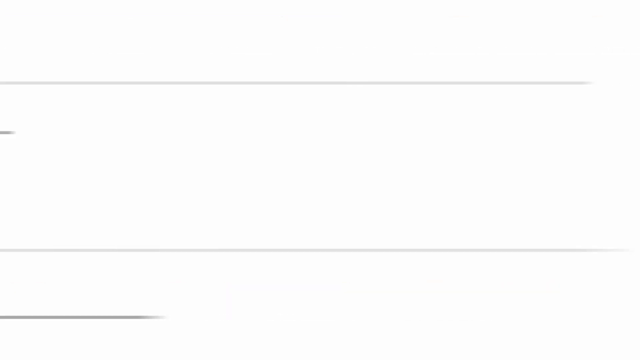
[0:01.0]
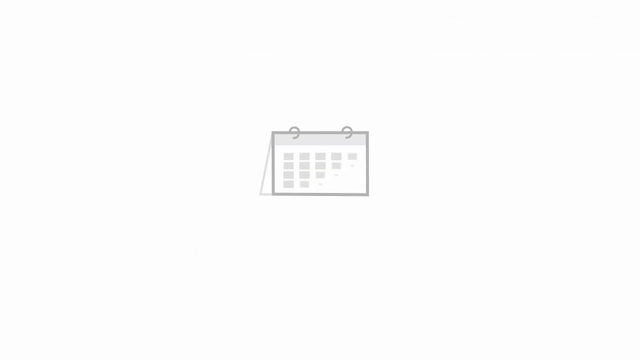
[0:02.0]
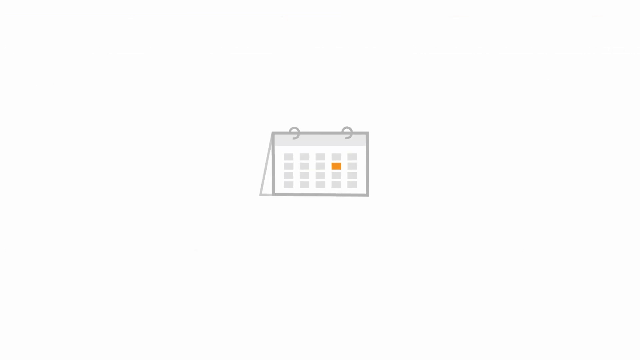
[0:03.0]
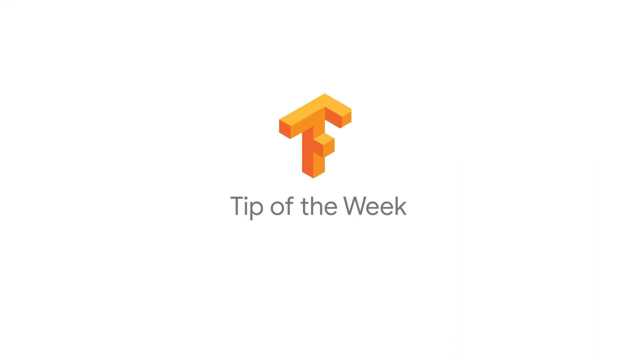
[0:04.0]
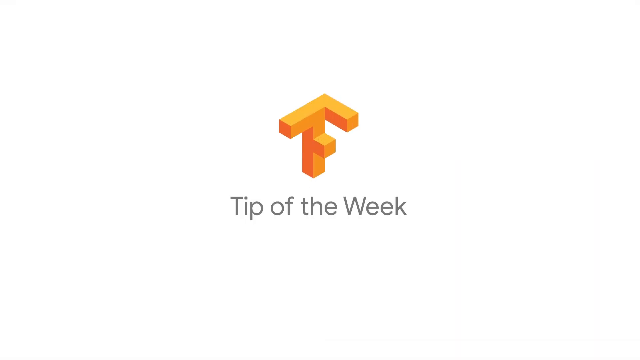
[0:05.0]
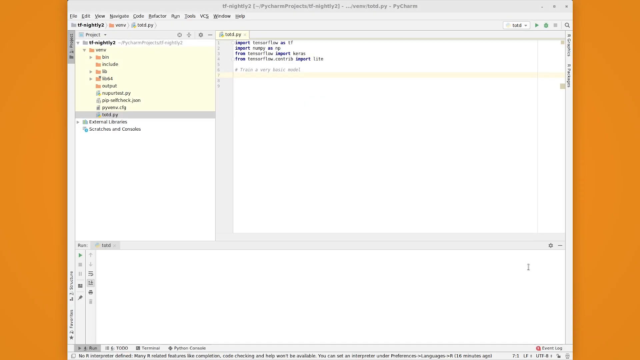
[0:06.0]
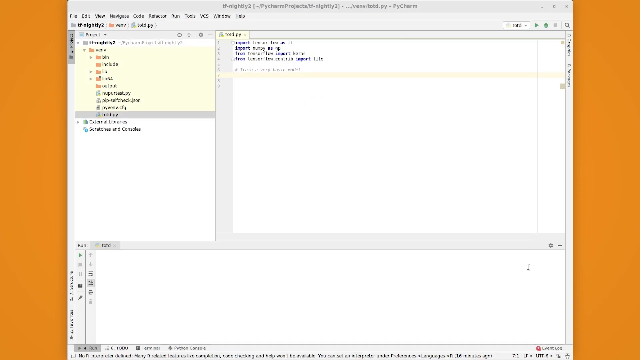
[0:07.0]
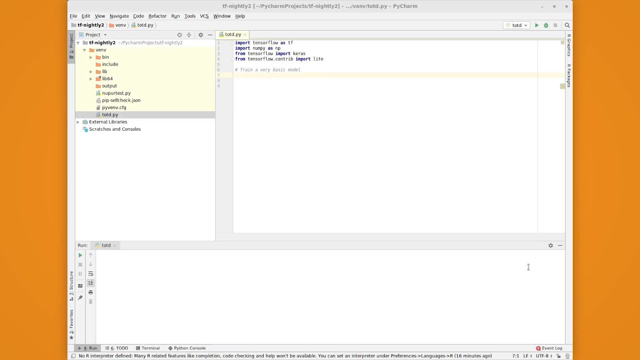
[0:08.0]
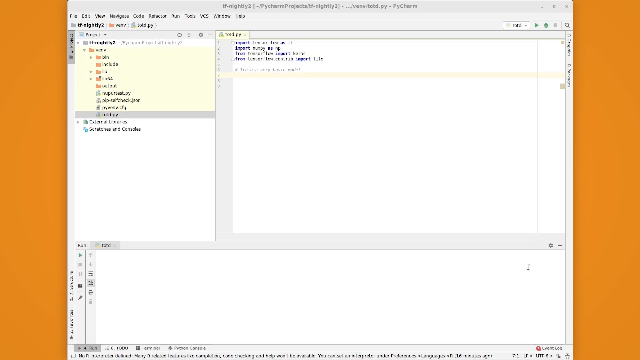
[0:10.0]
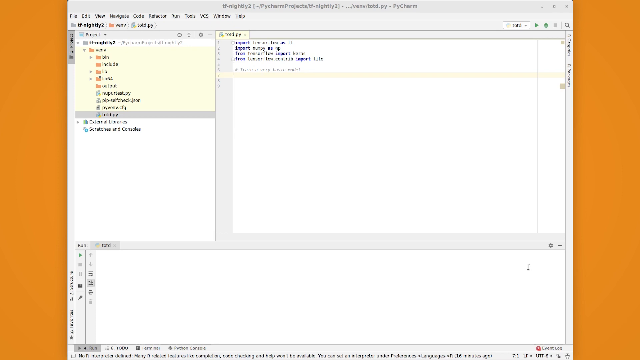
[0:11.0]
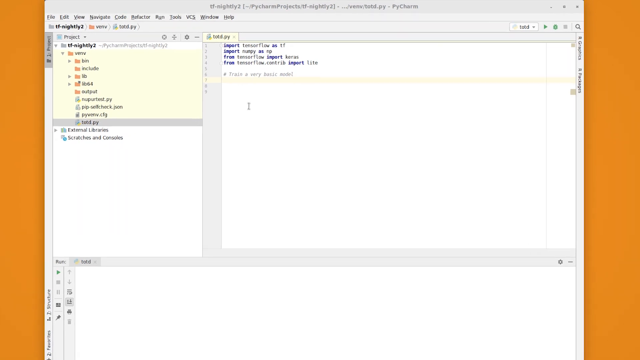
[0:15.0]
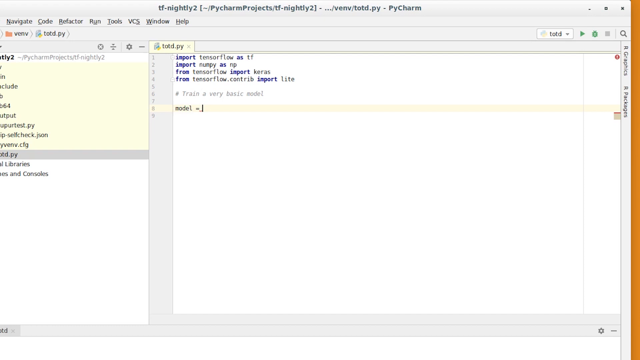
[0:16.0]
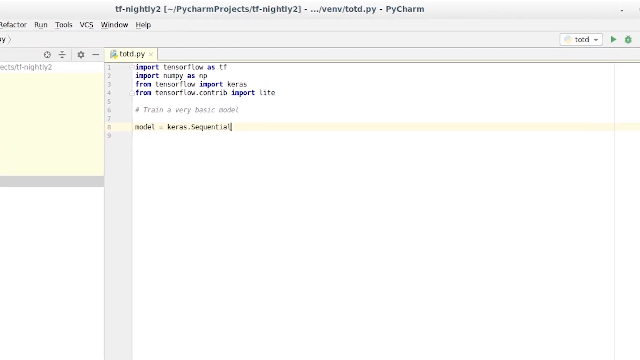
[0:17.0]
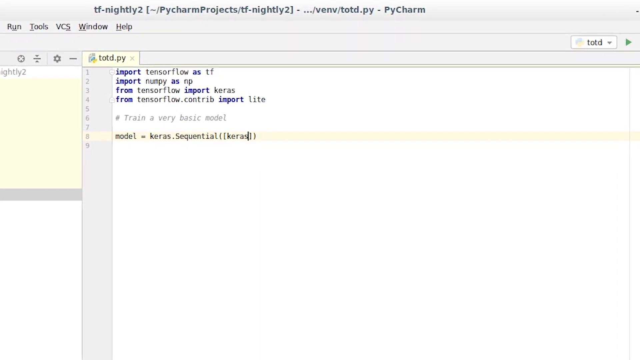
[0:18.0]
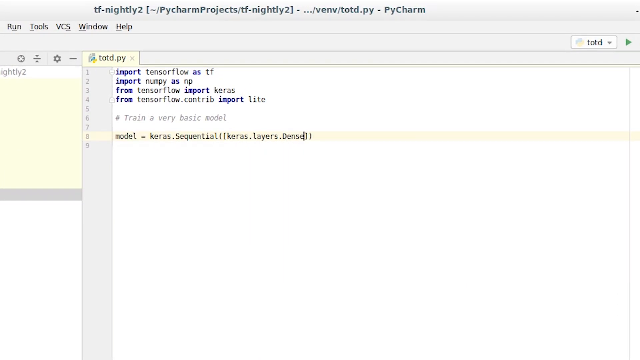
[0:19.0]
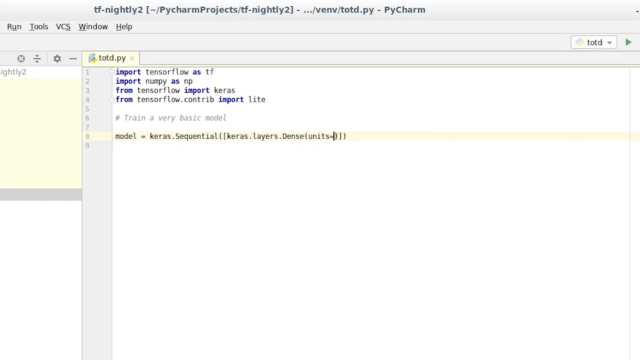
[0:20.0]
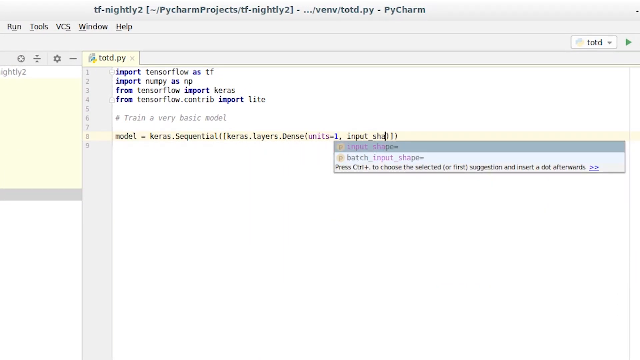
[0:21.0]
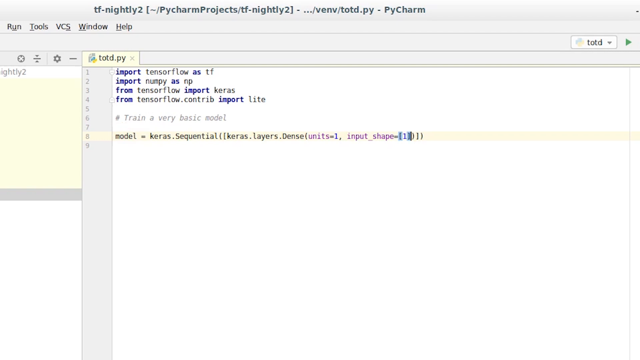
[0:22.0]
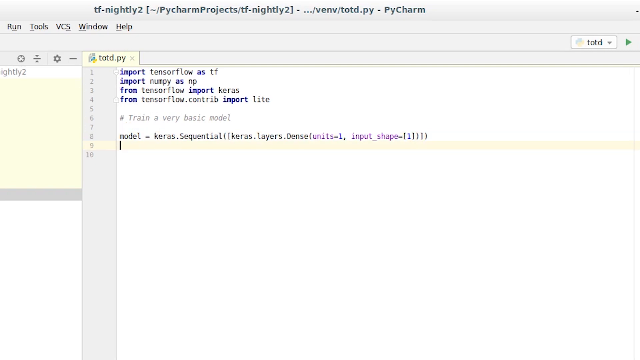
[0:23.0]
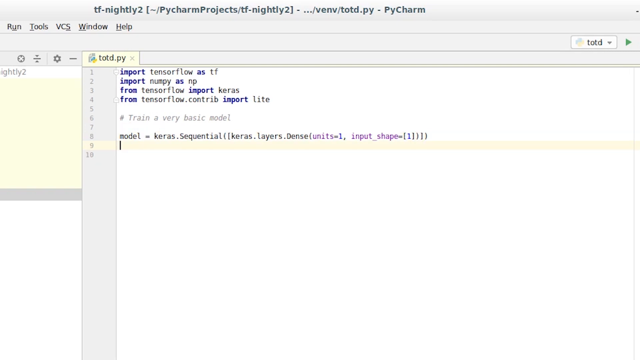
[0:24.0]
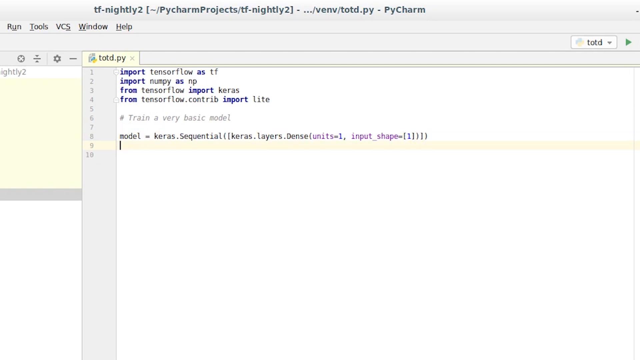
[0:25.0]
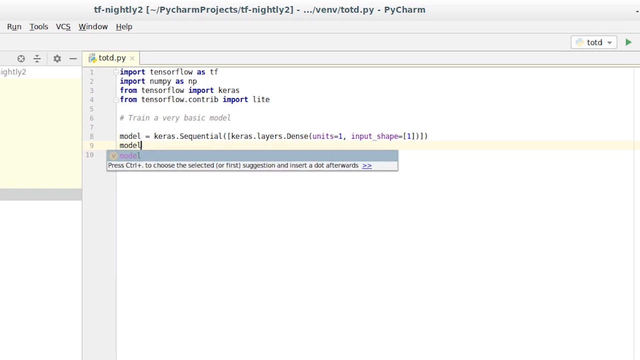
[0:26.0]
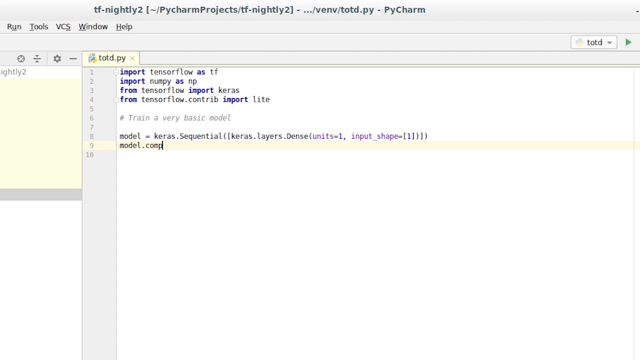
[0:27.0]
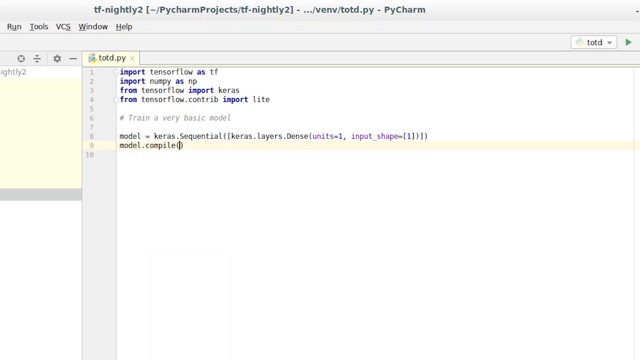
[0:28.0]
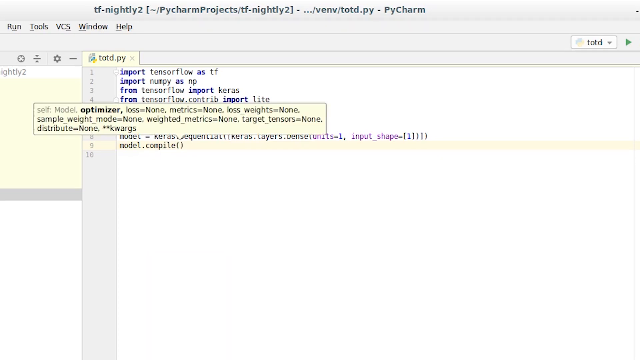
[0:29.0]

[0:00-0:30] An animated calendar pops up on the screen, with the text "tip of the week." Someone is then on their computer looking at files or documents, which are too small to see clearly. The view is then enlarged, showing code that reads "import tensorflow as tf" and "import numpy as np," along with "from tensorflow import keras" and a line involving the Keras model. The person types more code, including "model.compile" and "optimizer." Someone appears to be on a small document page or web page typing code.